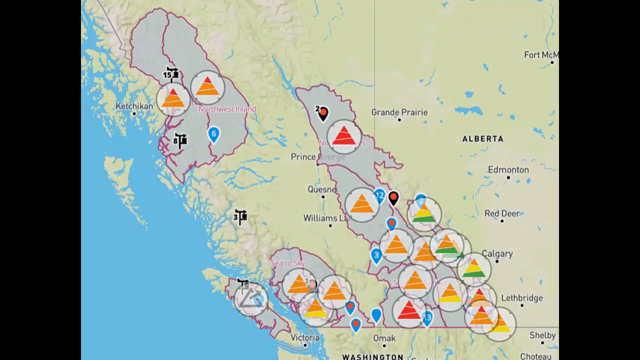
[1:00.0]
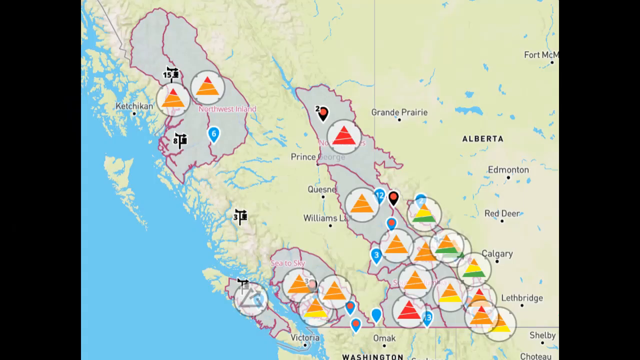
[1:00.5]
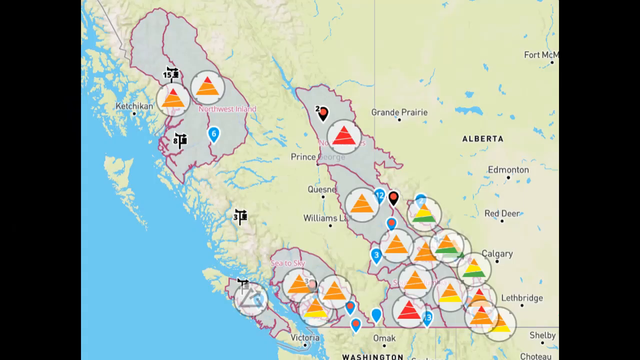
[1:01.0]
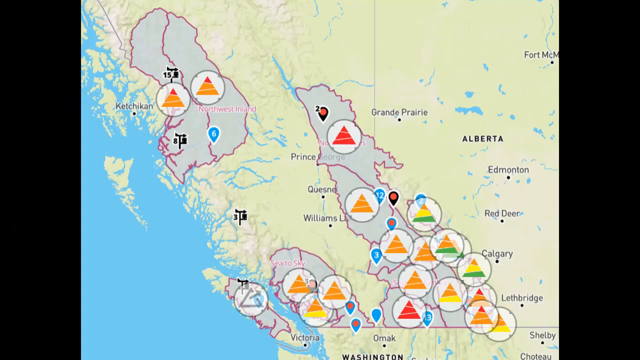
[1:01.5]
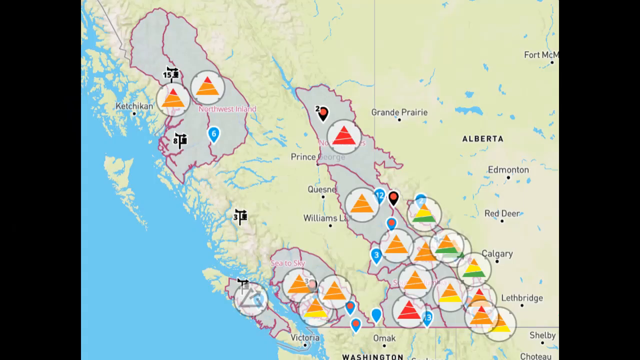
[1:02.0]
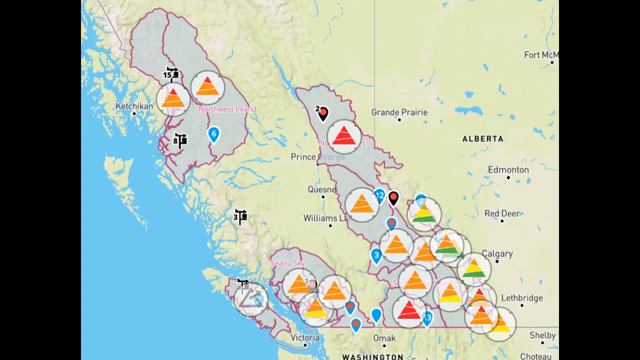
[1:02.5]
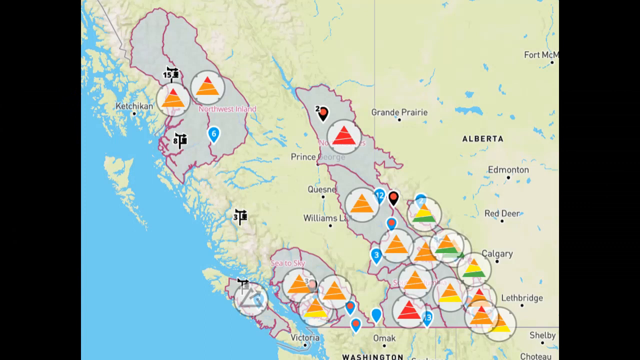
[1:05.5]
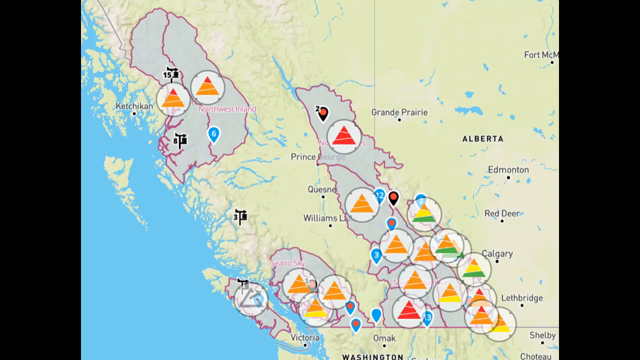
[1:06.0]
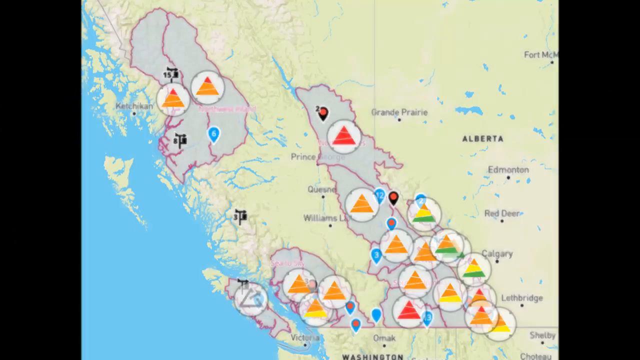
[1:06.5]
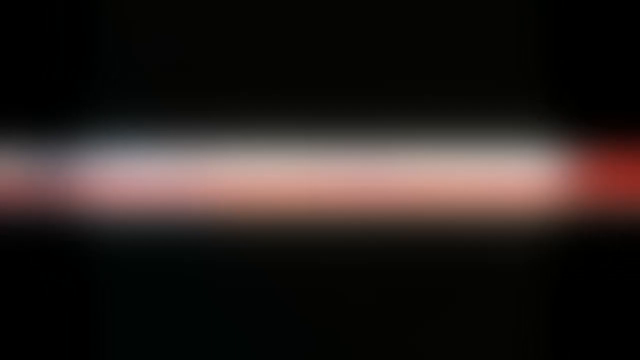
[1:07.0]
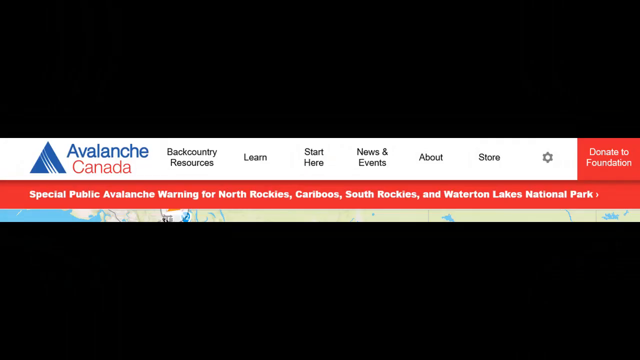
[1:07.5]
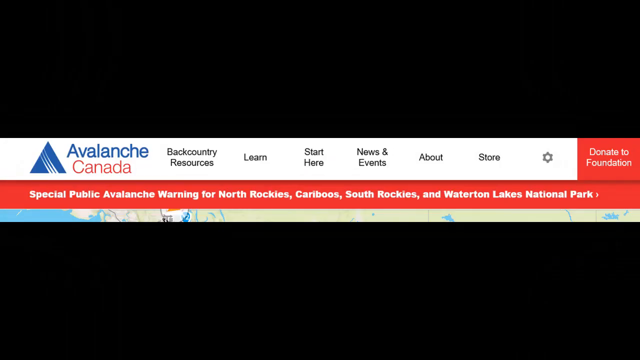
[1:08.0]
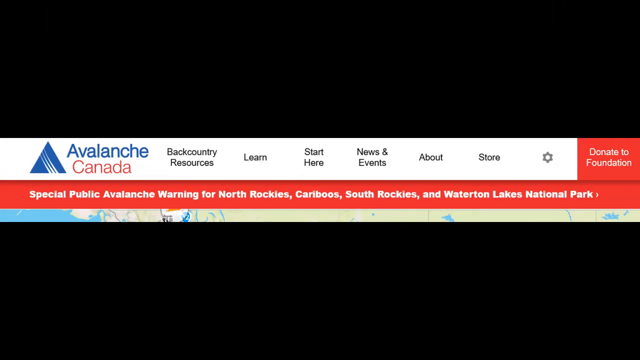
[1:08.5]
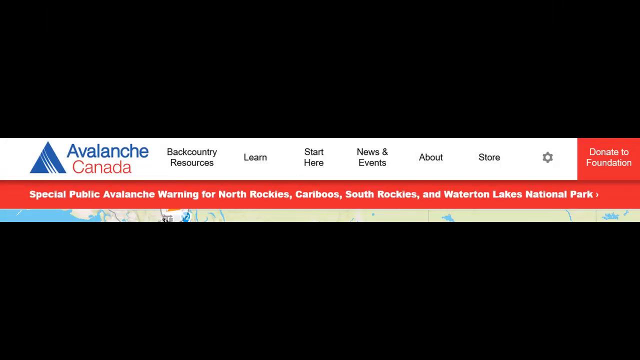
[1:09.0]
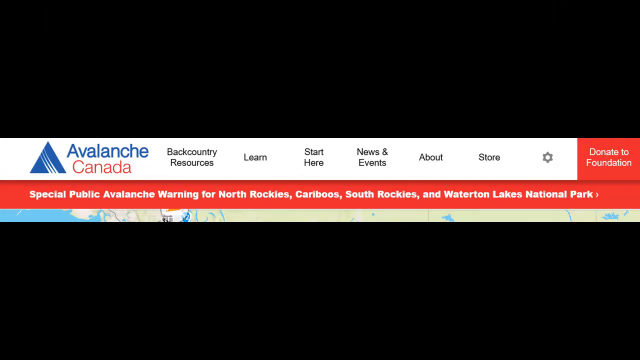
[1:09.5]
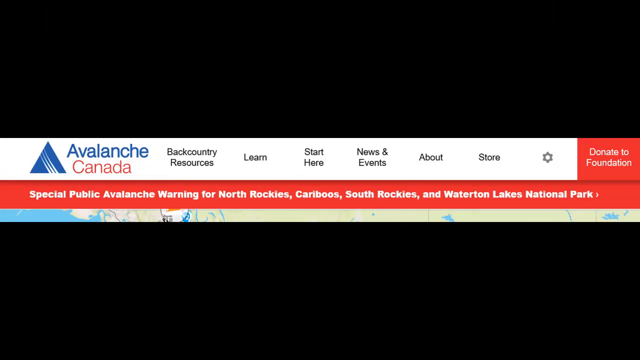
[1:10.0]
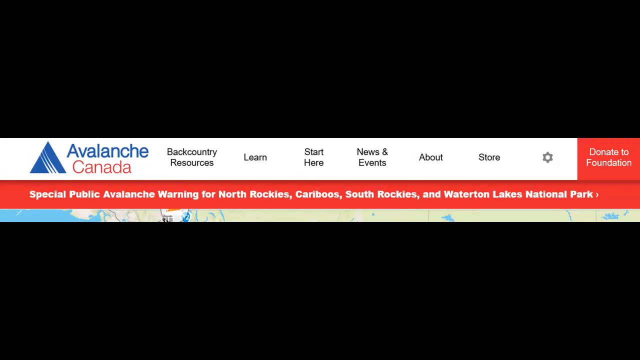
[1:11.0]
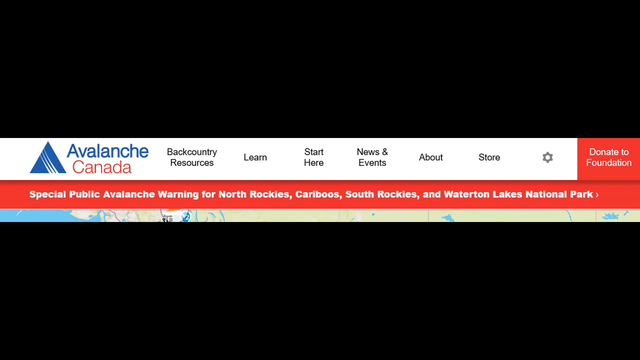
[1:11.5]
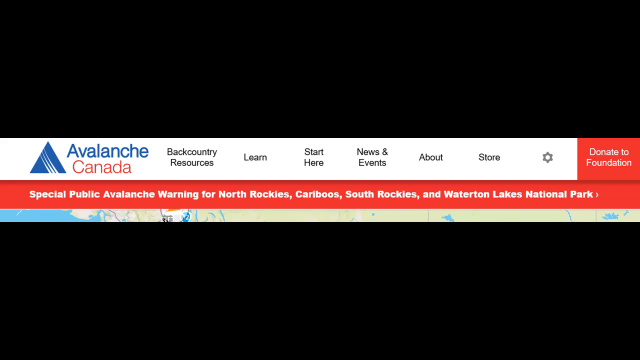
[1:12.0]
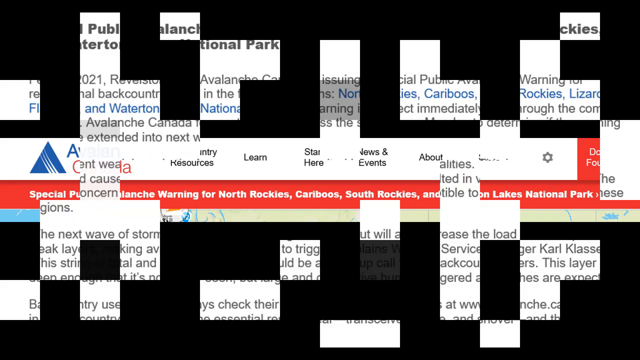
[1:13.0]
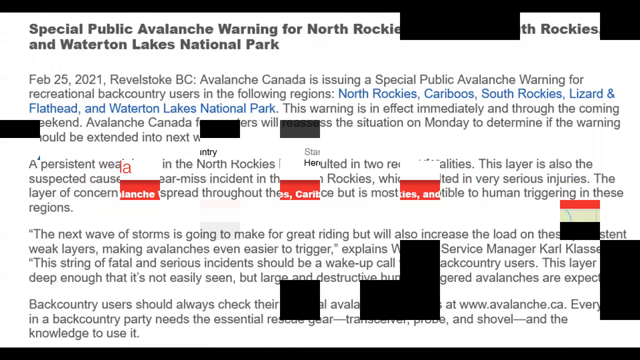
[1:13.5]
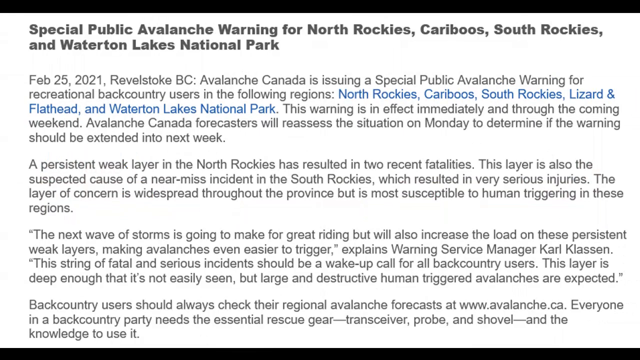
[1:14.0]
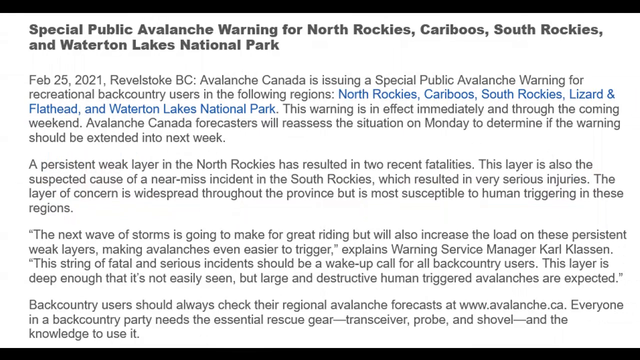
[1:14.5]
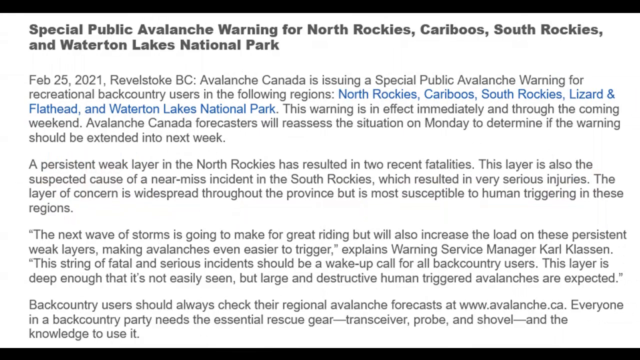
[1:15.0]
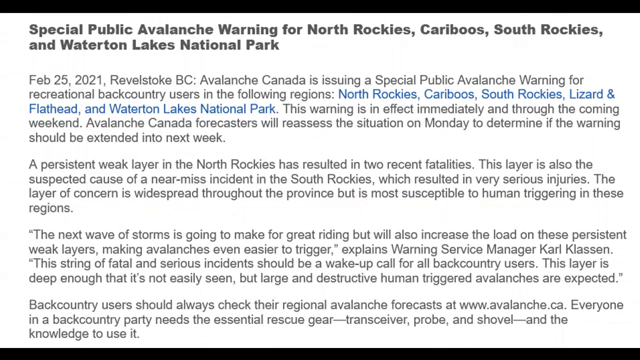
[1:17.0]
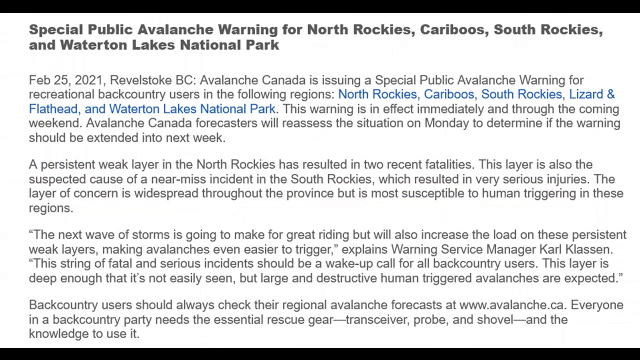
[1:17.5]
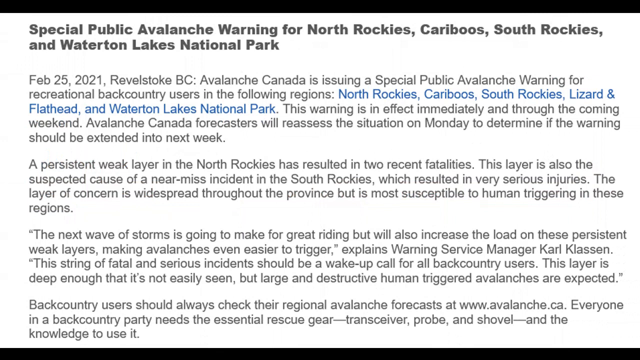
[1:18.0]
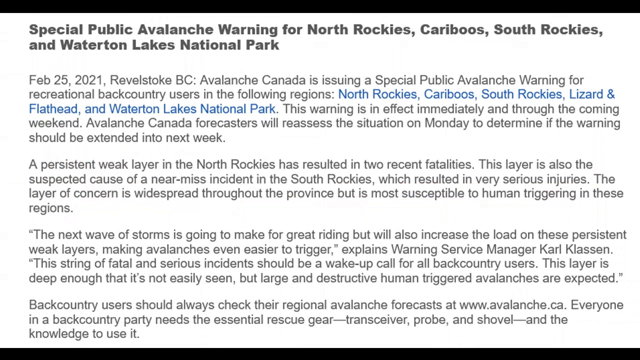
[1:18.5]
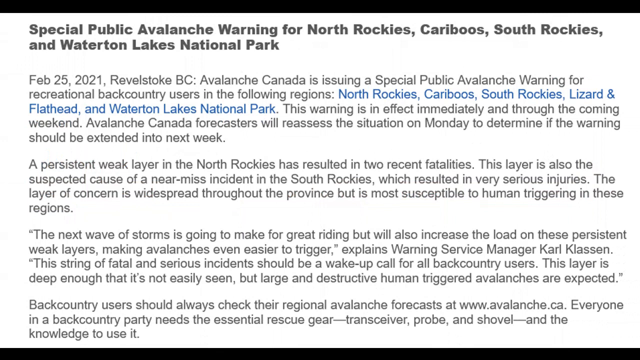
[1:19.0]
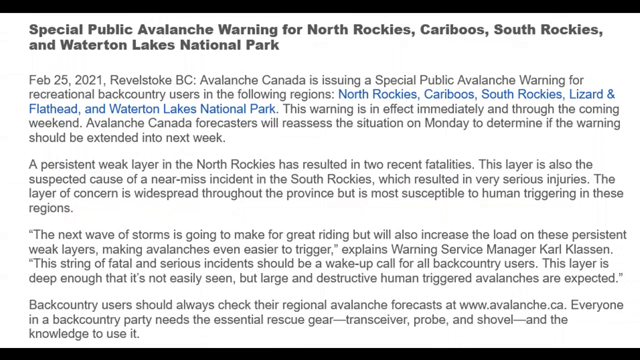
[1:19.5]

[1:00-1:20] Forecast text on screen describes cloud with a 60% chance of flurries, wind becoming southwest 30 km this morning, and a UV index of 1 or low. For tonight it gives cloud with a 30% chance of flurries this evening, clearing near midnight, with wind northwest 20 km gusting to 40 becoming light near midnight. Next, a map shows different locations for the weather report, some marked with yellow triangles and others with red triangles. The words "Avalanche Canada backcountry resource" appear, and further statements are on the screen.